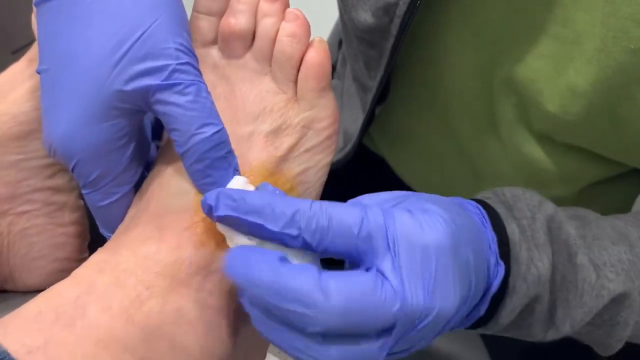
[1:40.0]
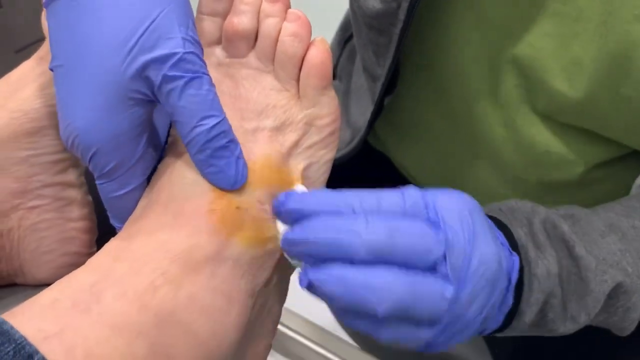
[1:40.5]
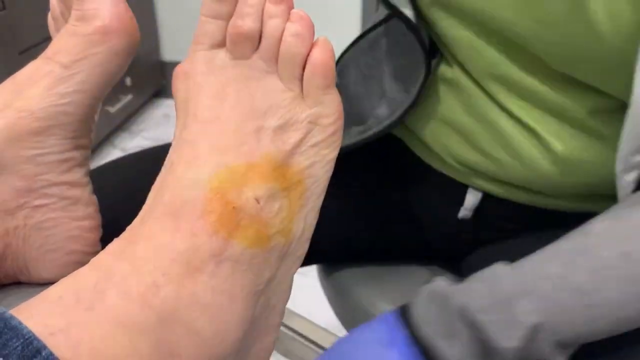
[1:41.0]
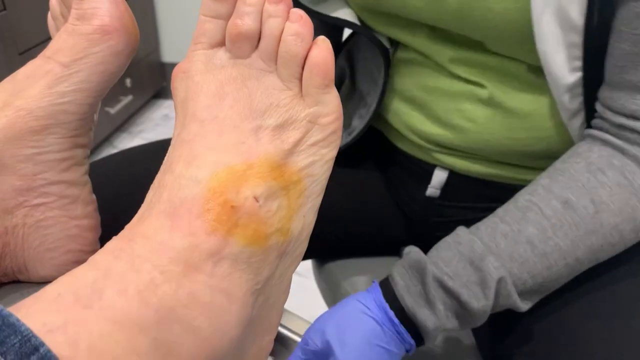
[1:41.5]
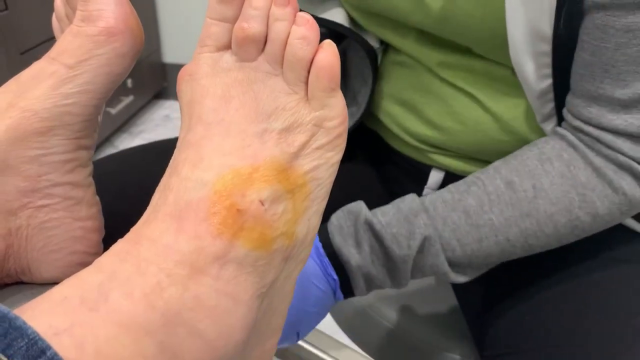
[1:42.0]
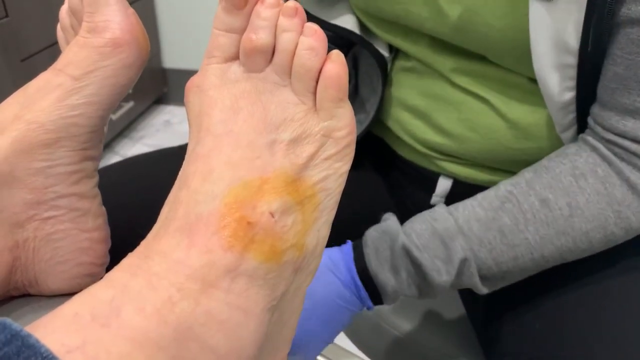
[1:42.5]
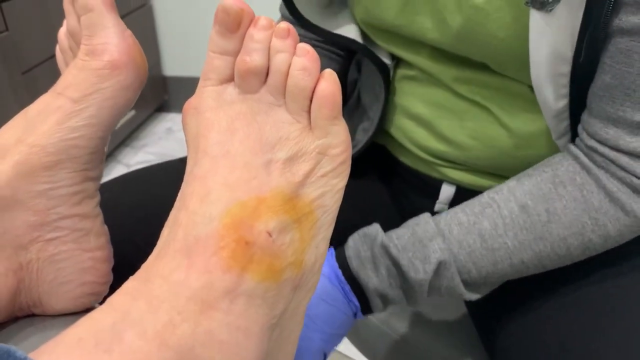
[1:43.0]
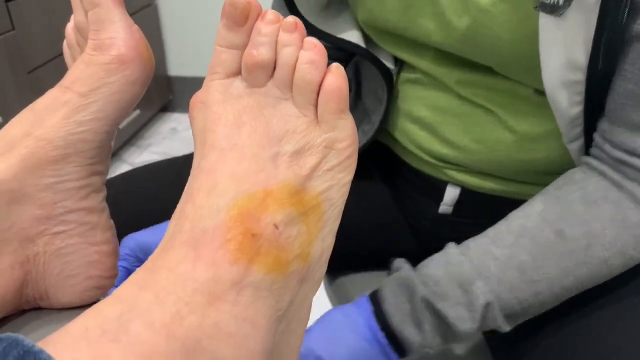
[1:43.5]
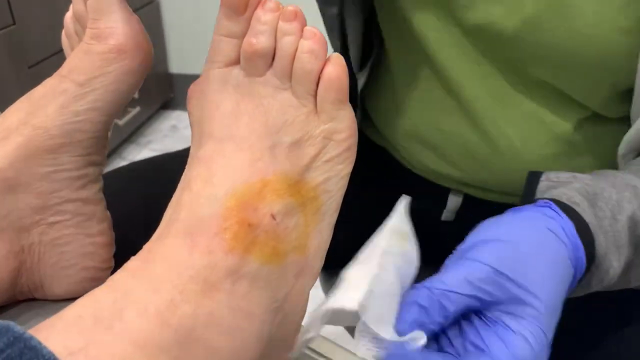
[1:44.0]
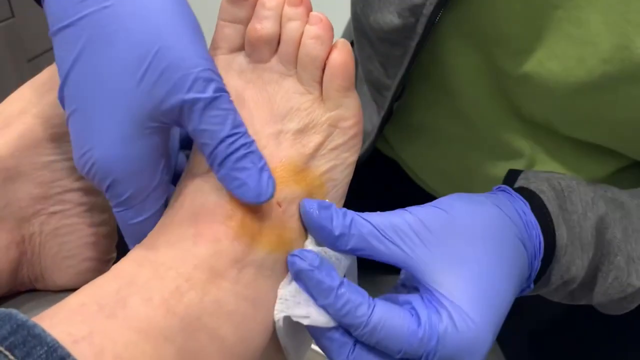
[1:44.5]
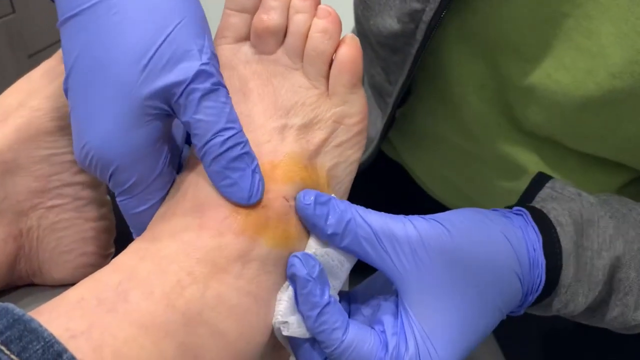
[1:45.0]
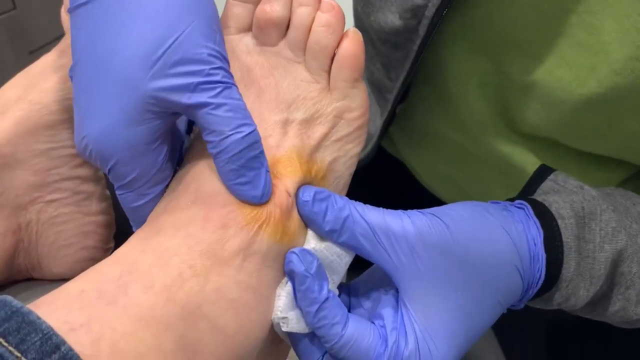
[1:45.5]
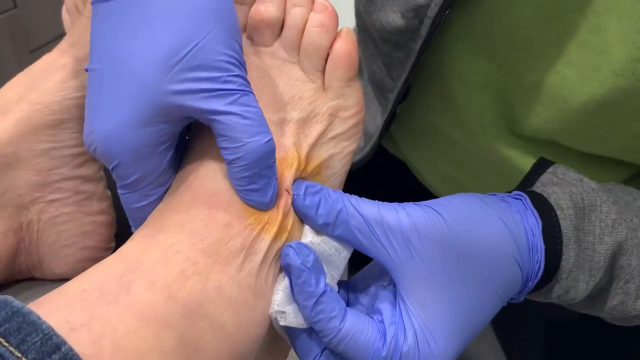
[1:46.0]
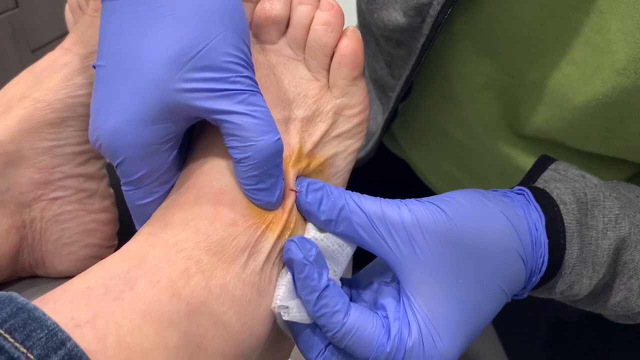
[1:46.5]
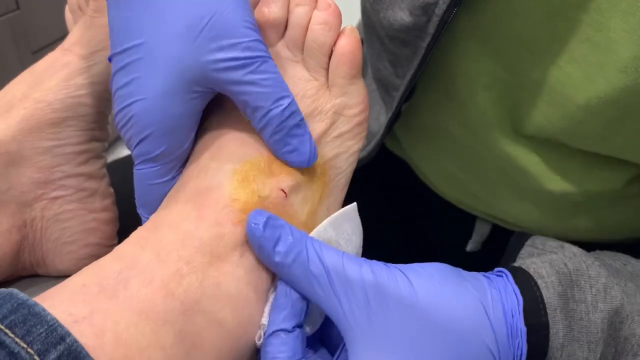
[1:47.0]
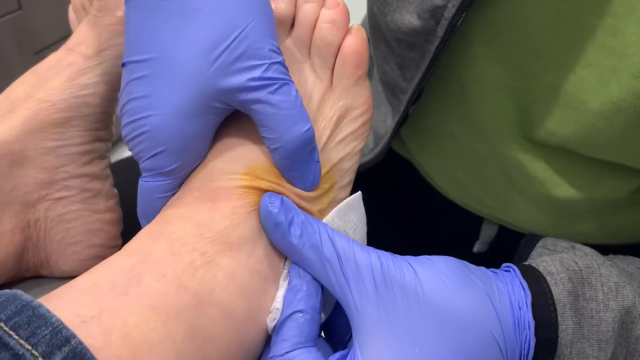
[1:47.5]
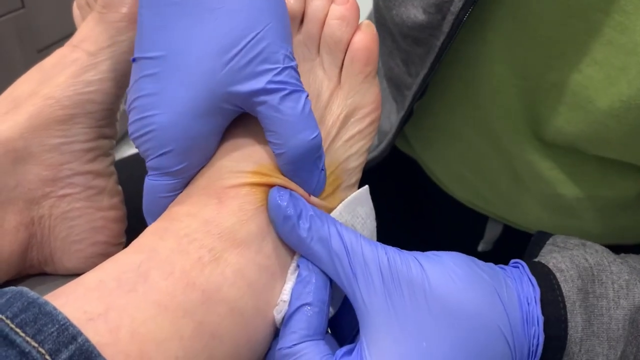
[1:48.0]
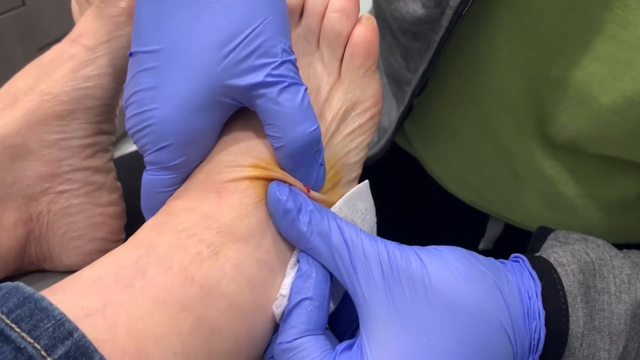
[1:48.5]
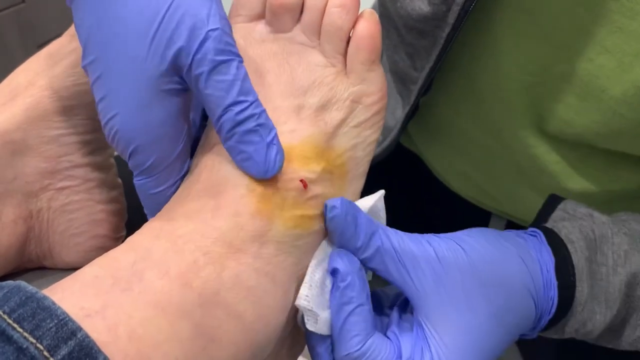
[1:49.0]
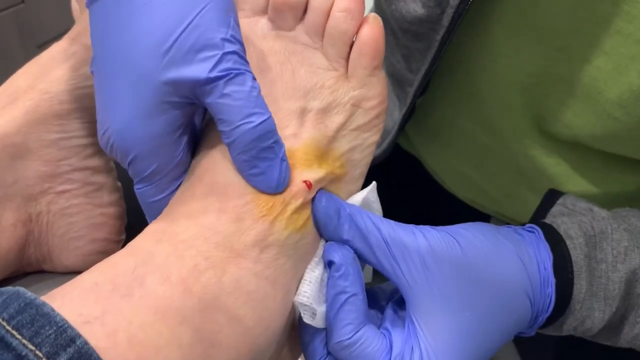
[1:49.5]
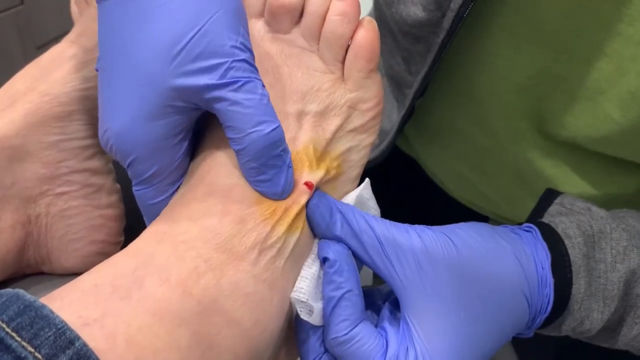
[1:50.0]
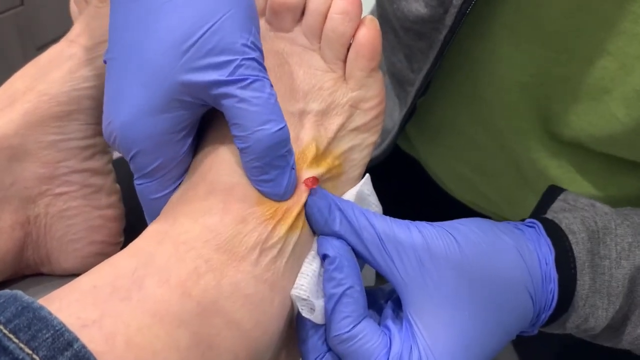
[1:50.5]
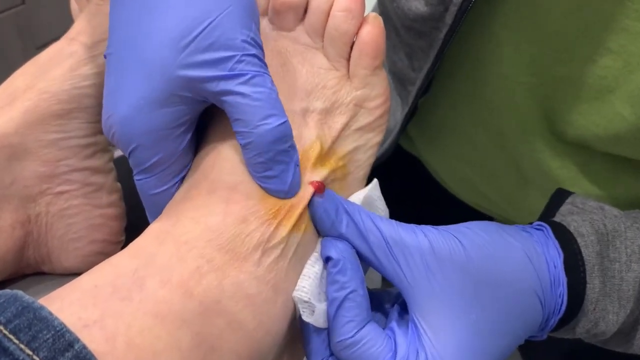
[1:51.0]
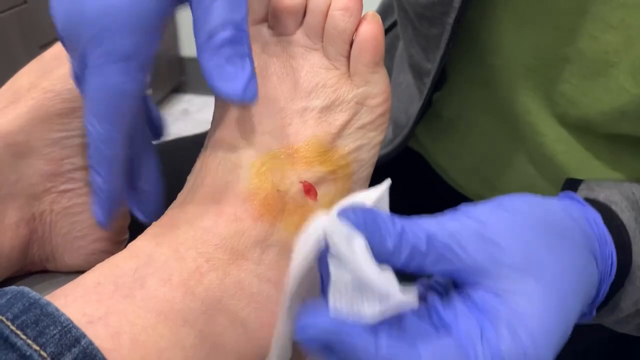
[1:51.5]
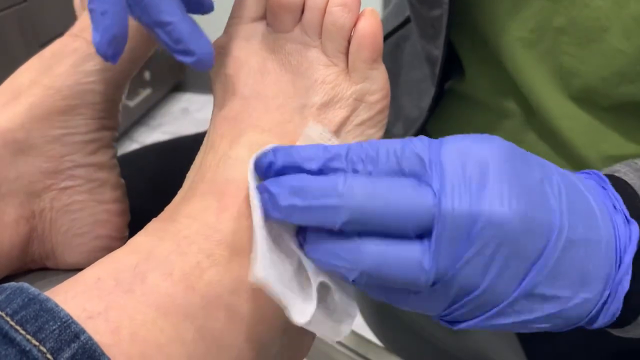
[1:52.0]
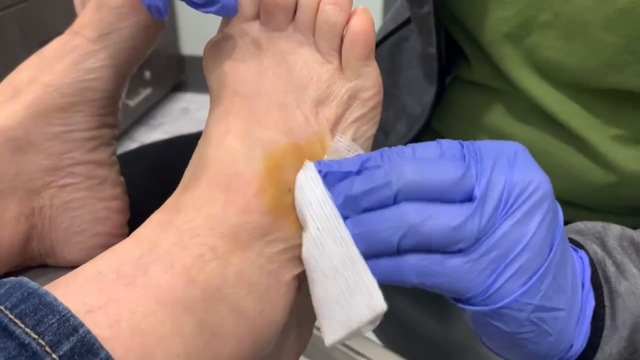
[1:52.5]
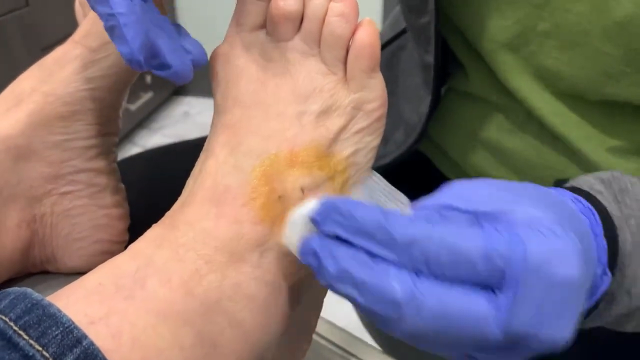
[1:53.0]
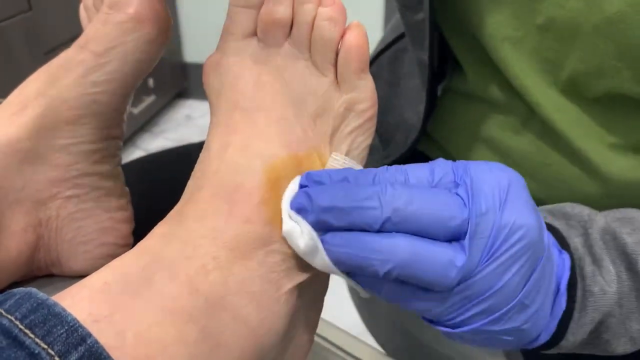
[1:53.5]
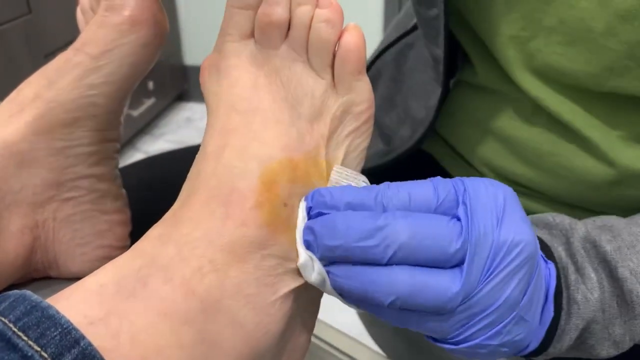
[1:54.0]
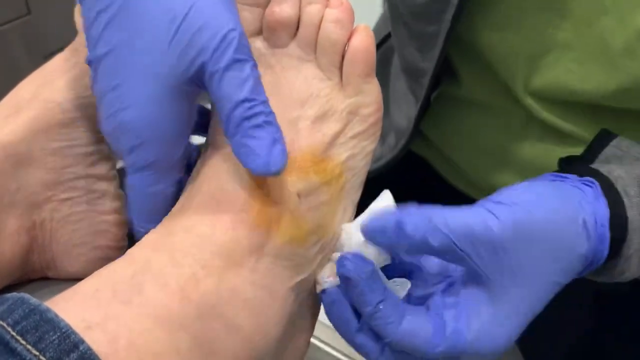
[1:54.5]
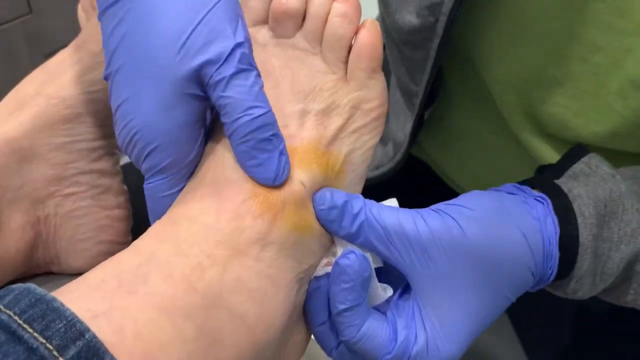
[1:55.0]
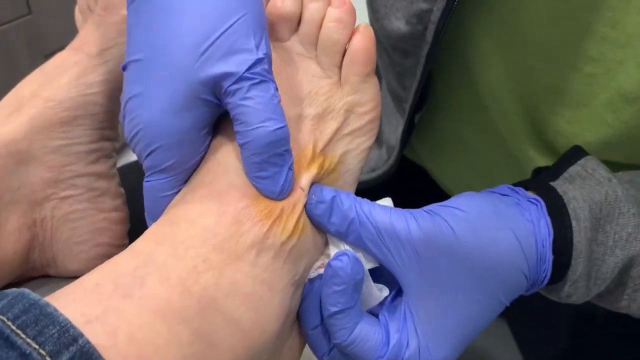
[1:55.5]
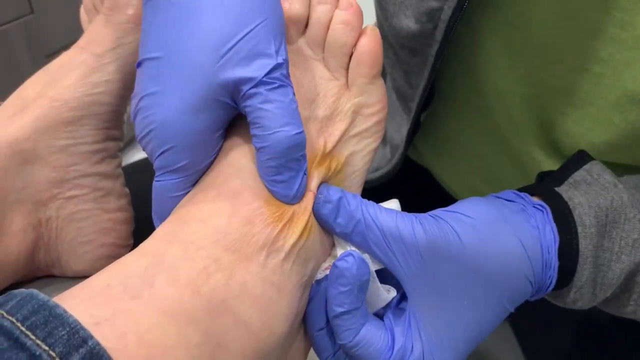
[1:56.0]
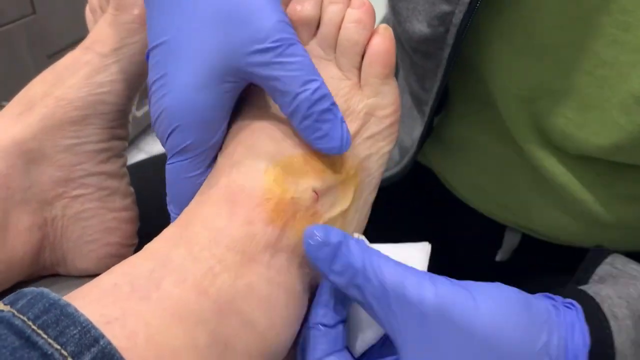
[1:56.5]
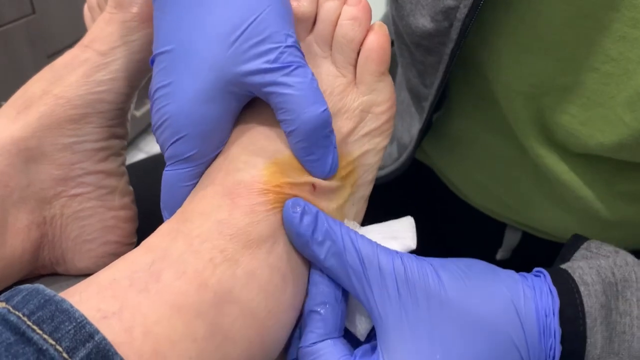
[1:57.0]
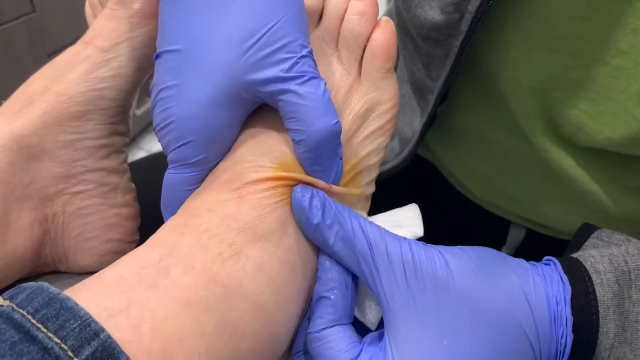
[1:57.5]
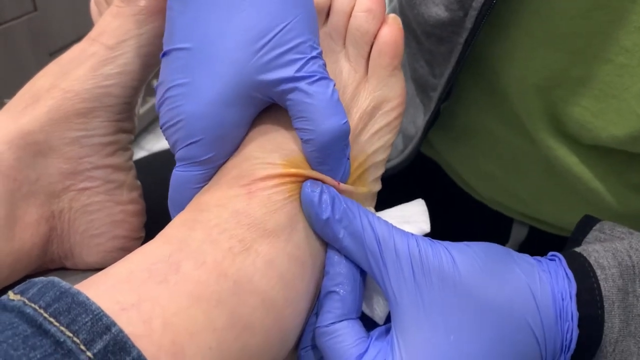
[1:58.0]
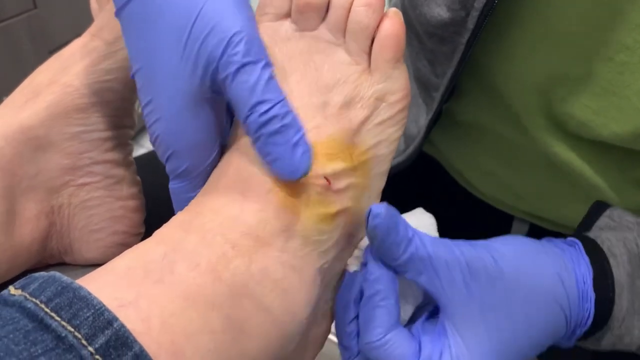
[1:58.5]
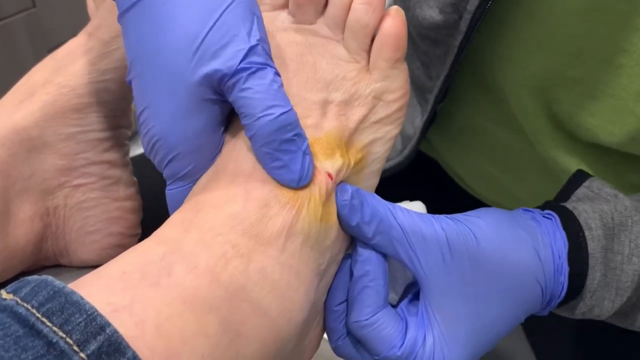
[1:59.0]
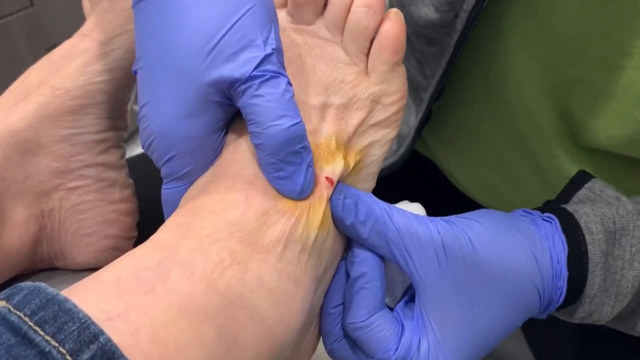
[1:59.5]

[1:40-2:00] A person is lying supine with a condition on the top of one foot, a circle that is much yellower than the surrounding area. Pus or some other material comes out of this area, and the podiatrist uses a tissue or some other material to remove it. The podiatrist wears purple or blue clothes and a mask.